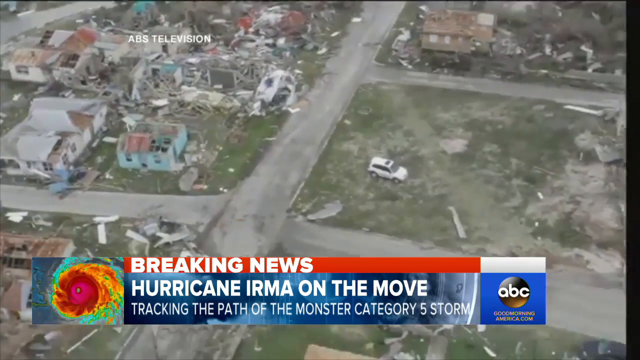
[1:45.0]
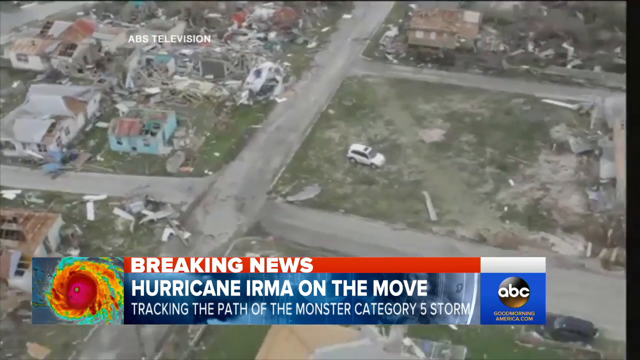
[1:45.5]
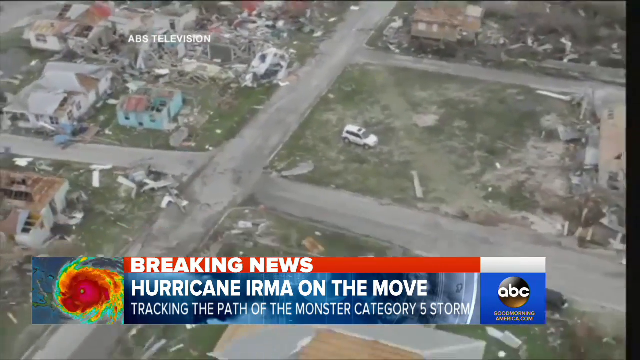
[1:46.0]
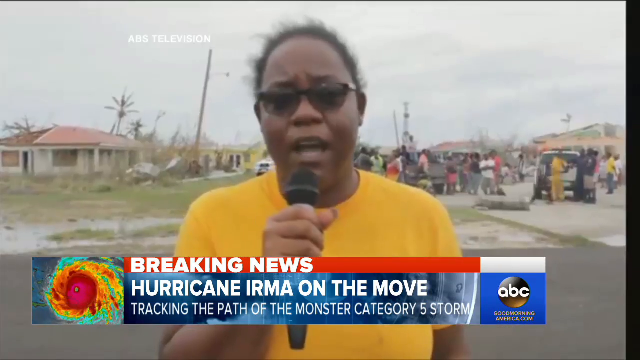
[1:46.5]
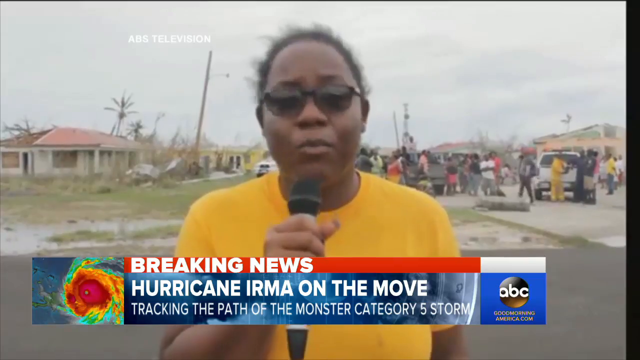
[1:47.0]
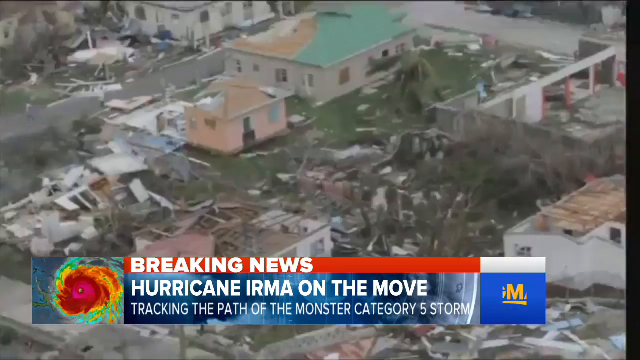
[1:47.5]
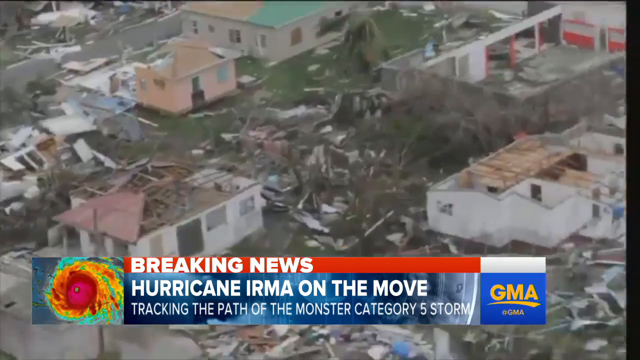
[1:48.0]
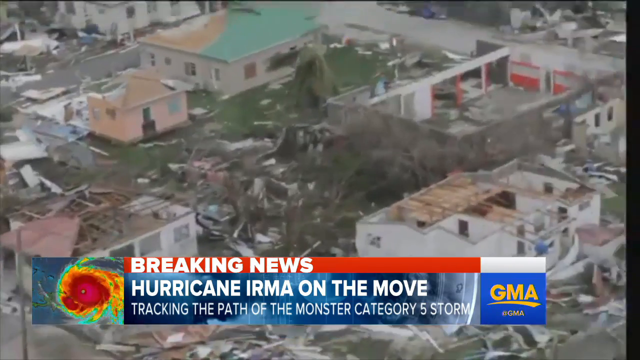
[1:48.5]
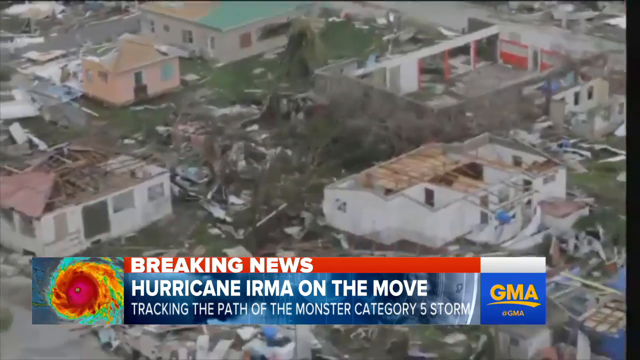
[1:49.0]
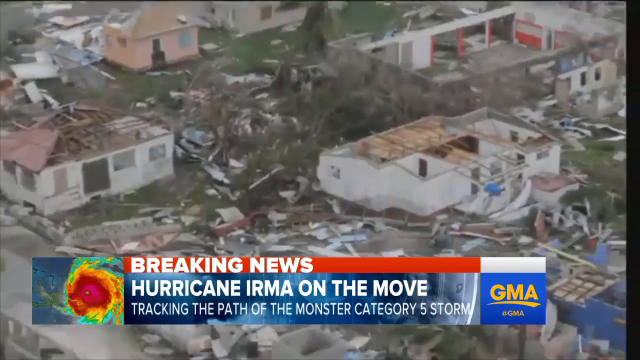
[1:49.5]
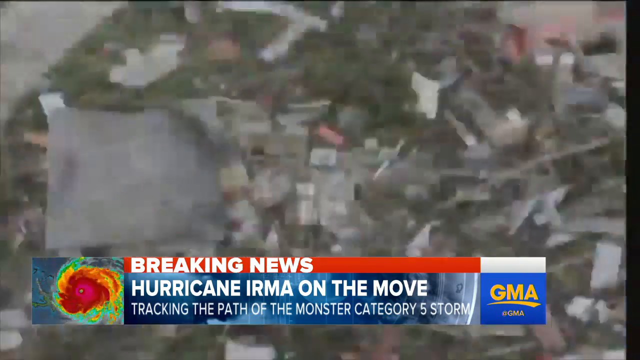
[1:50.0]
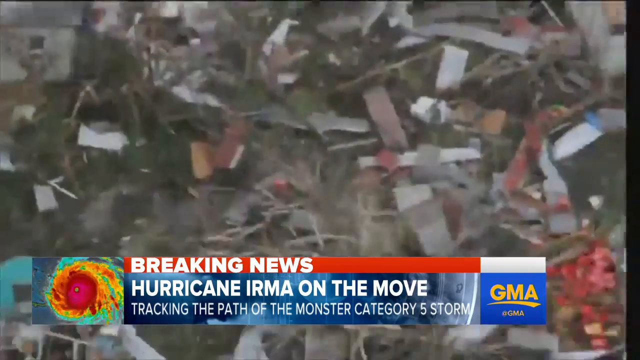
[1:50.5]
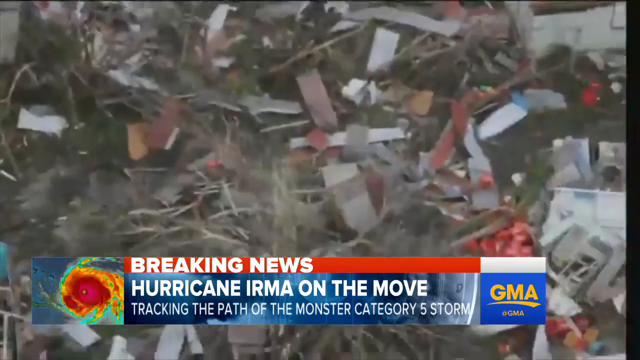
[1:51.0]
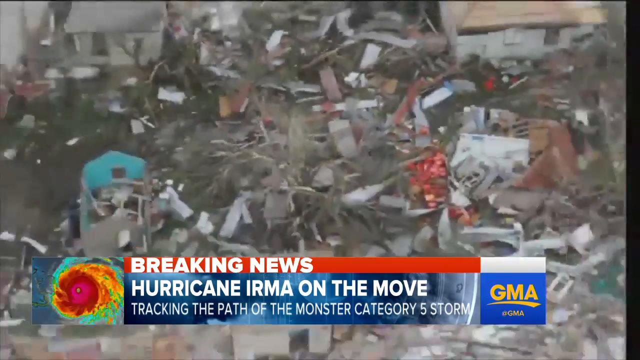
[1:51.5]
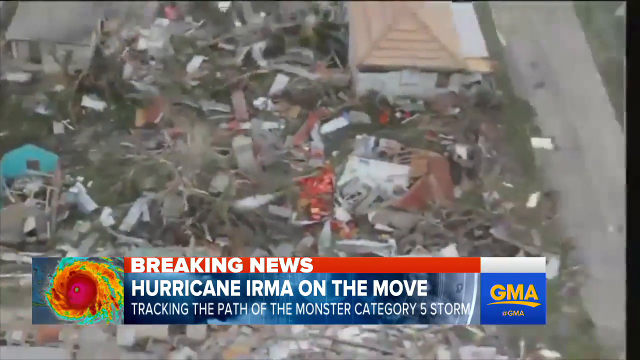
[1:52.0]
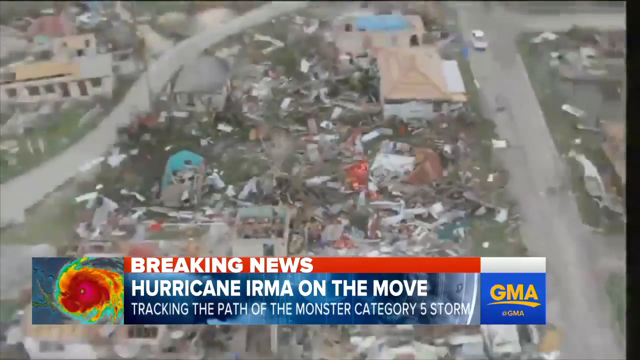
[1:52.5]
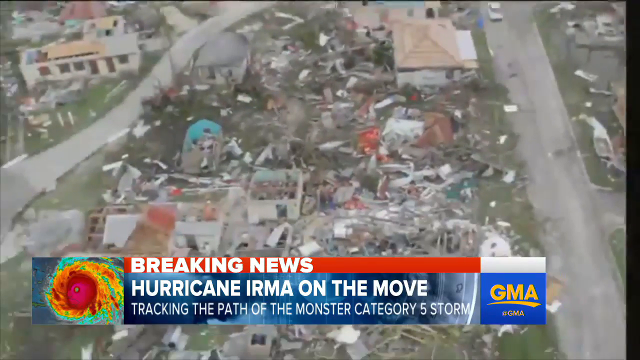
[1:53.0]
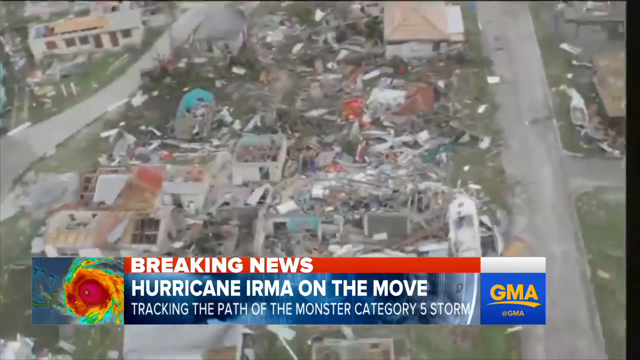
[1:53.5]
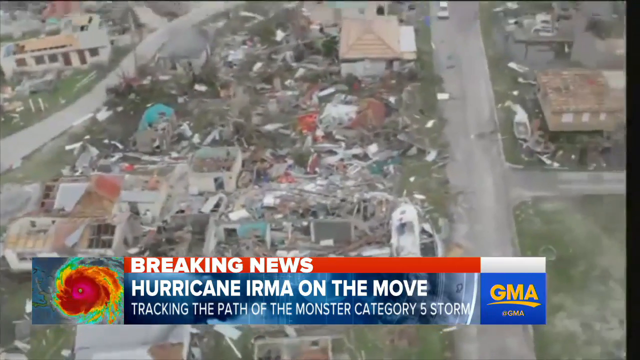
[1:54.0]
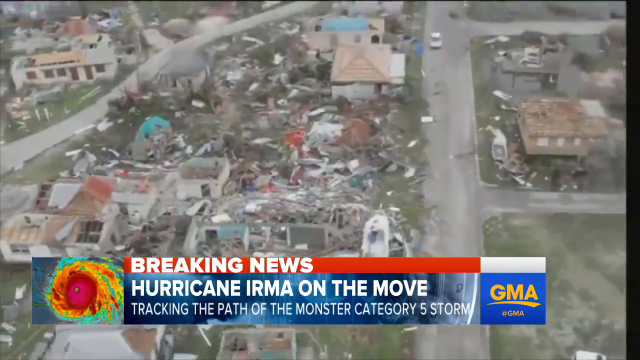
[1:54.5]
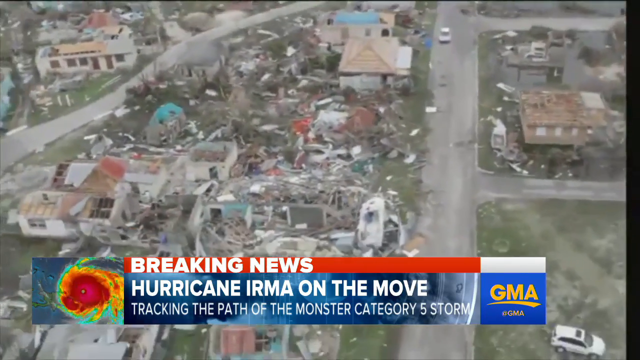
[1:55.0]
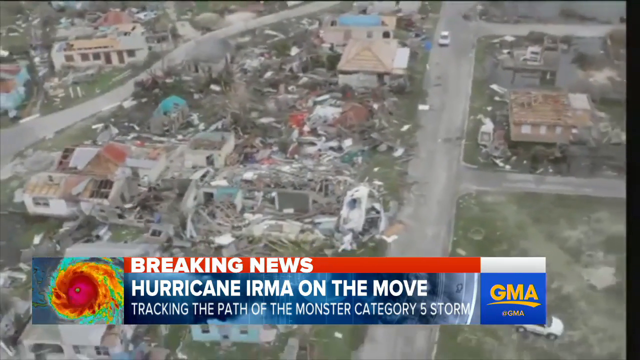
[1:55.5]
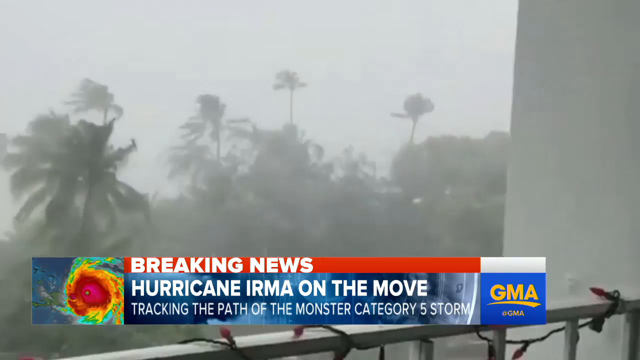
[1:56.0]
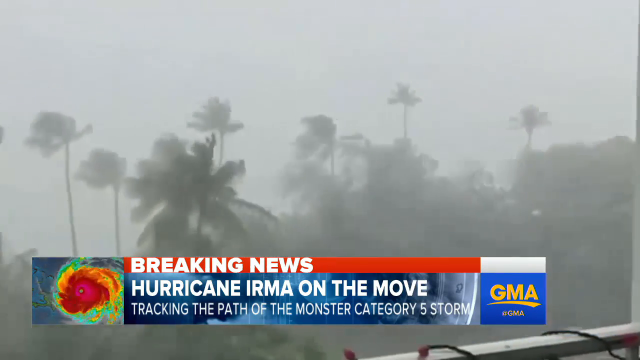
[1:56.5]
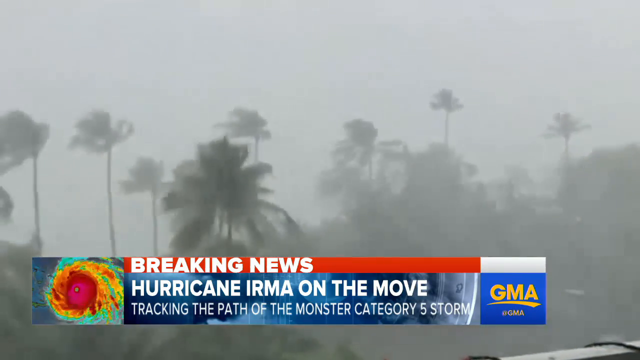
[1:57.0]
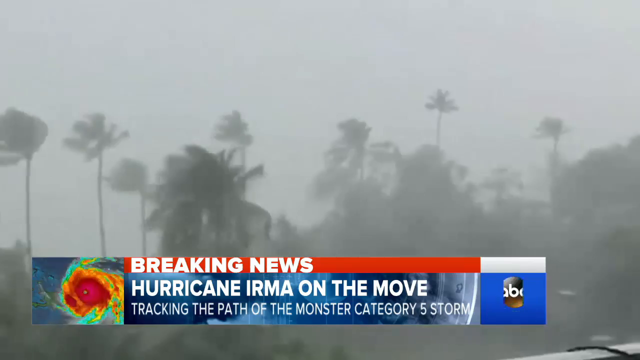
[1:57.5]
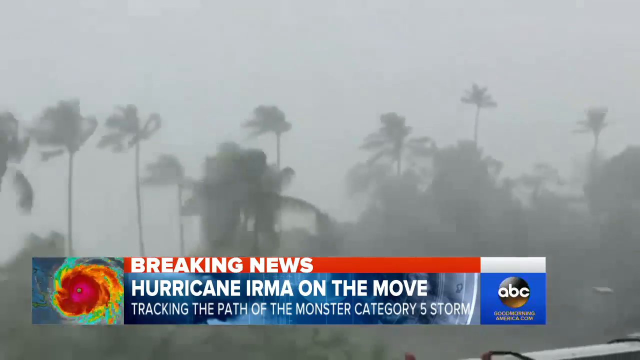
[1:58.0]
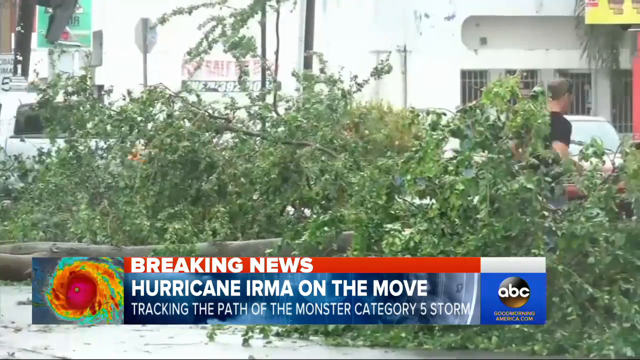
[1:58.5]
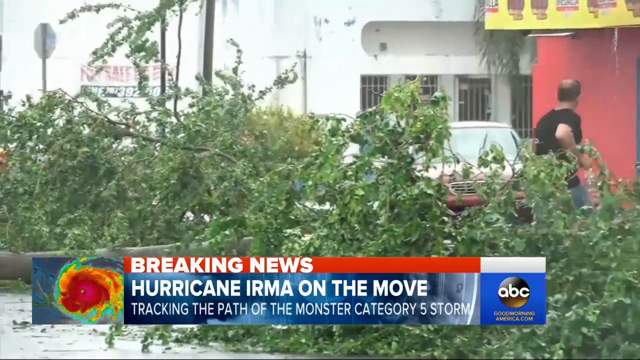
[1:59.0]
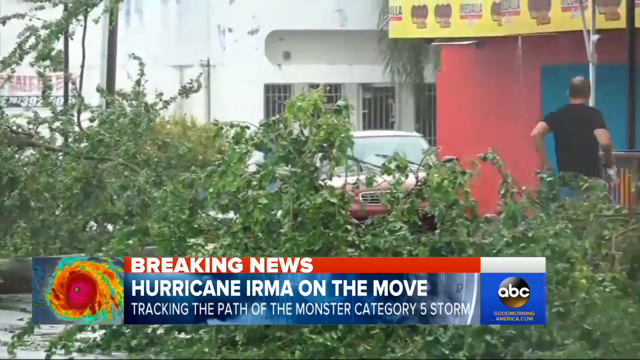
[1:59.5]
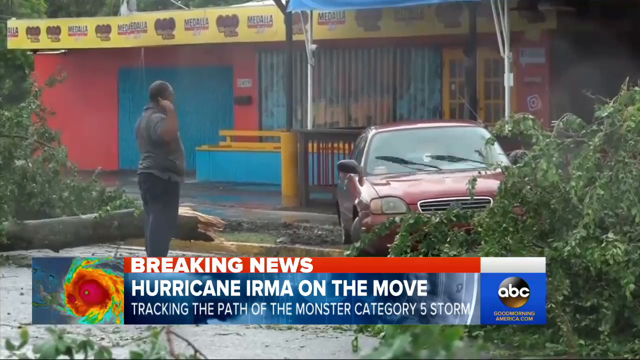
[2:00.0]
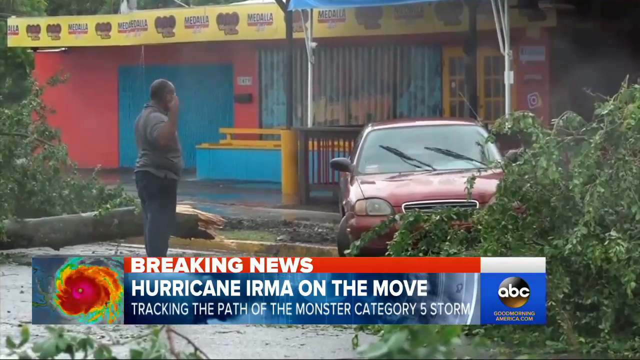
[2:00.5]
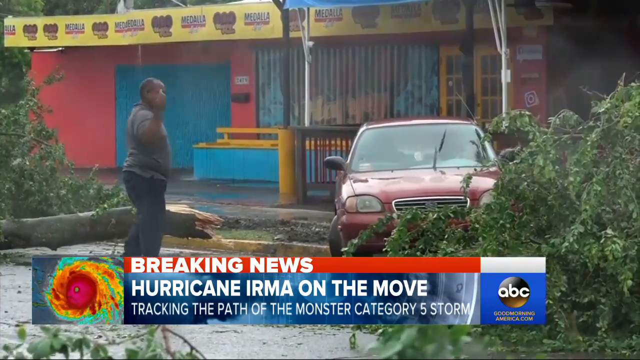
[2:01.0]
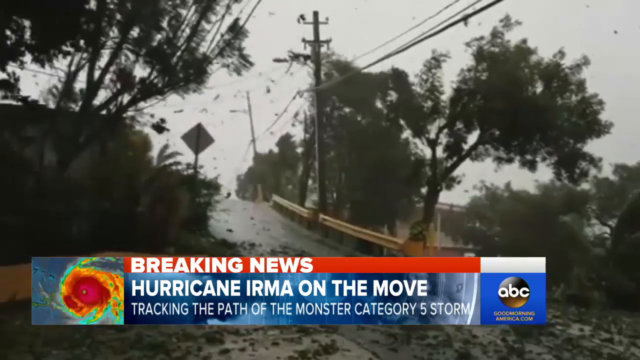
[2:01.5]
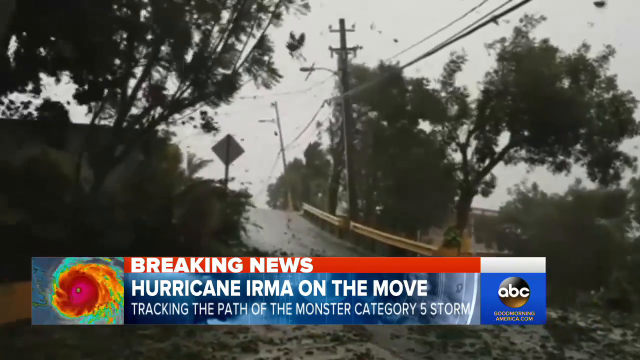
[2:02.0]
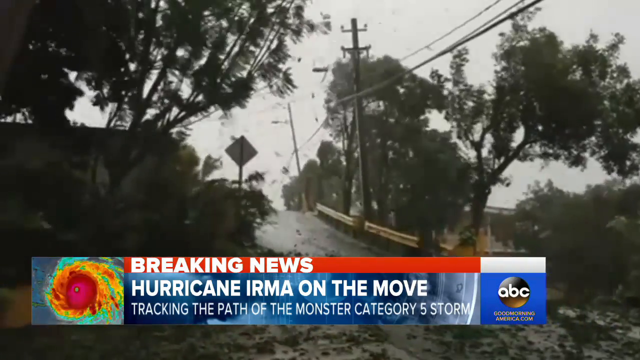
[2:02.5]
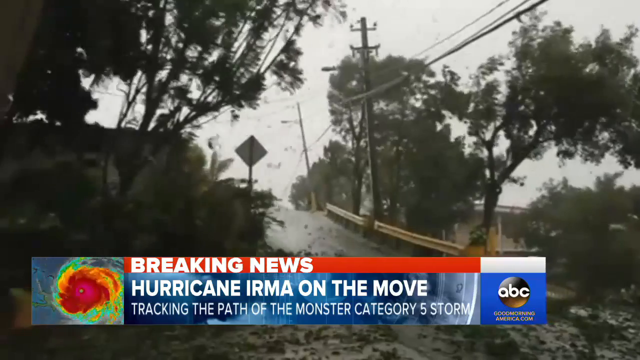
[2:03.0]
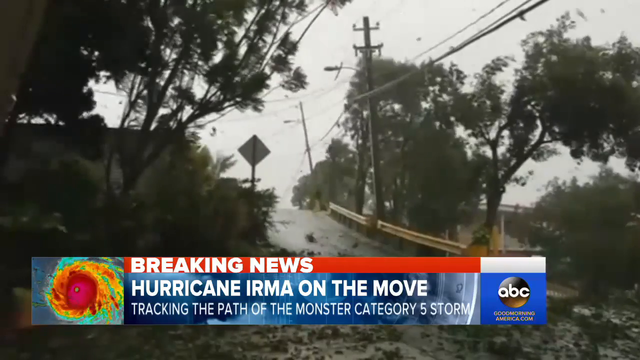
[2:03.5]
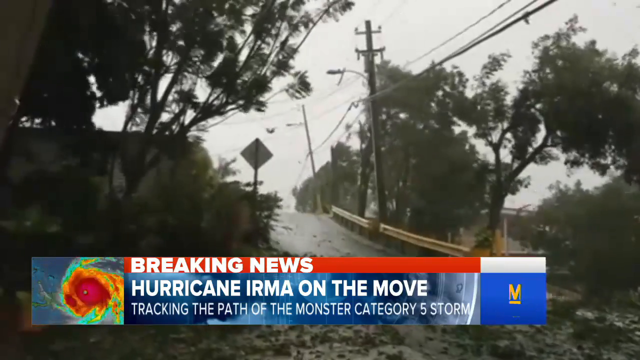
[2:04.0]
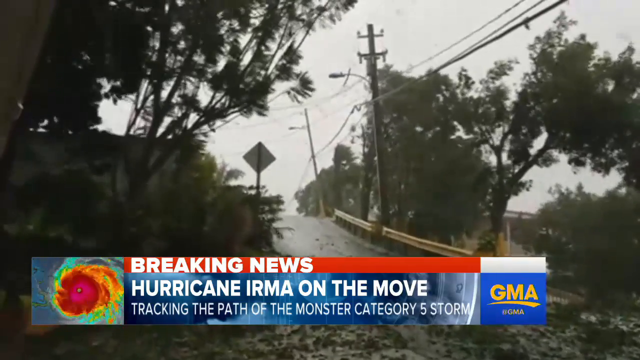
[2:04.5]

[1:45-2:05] A news clip of Hurricane Irma shows the hurricane in motion, with many trees blowing a lot and quite a bit of rain. People in an island-like area are interviewed, and there are very few cars on the roads. It looks like many roofs and buildings have been affected; some structures no longer look like structures, though it is possible to see where they were once in one piece. A woman in an interview has dark black skin, rounded cheeks and white teeth, wears shaded sunglasses and a yellow t-shirt, and holds a microphone in her hand. The footage goes back and forth between views of the city or island, where people are instructing people to remove their cars, aerial views of the effects of the storm, and the newscaster.